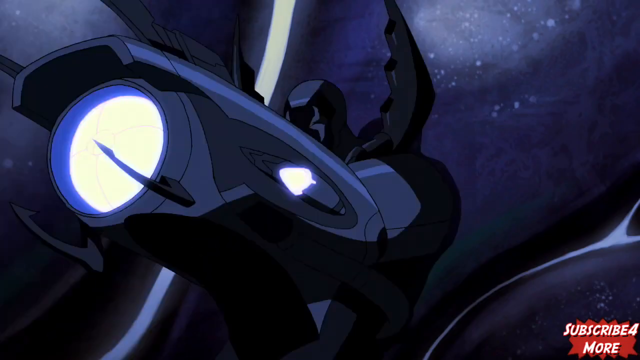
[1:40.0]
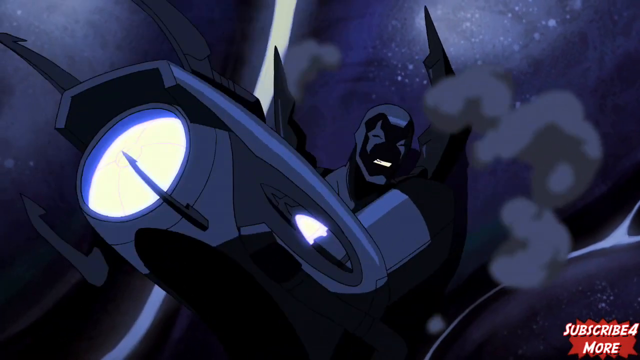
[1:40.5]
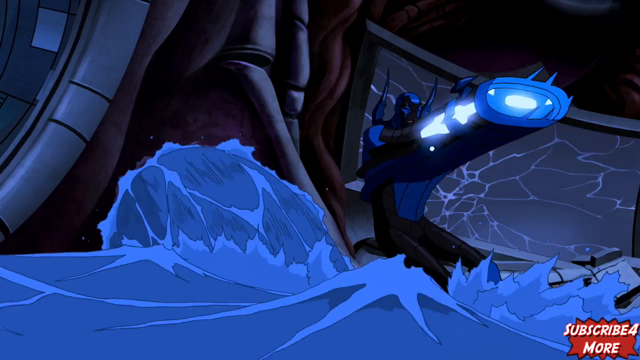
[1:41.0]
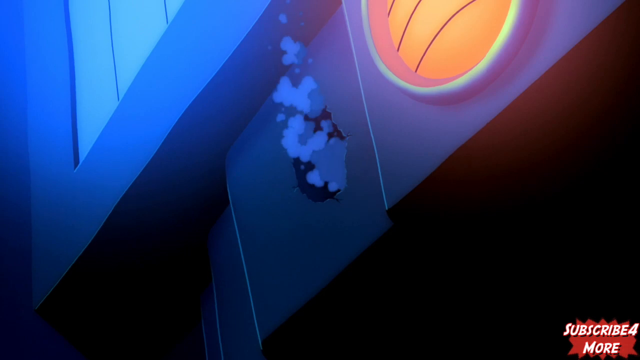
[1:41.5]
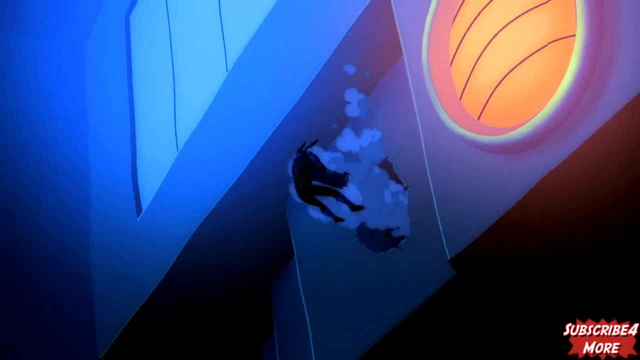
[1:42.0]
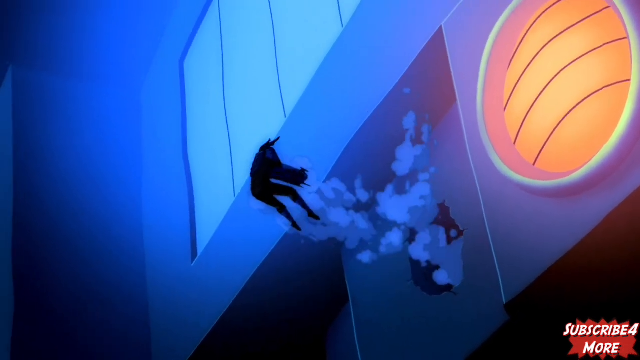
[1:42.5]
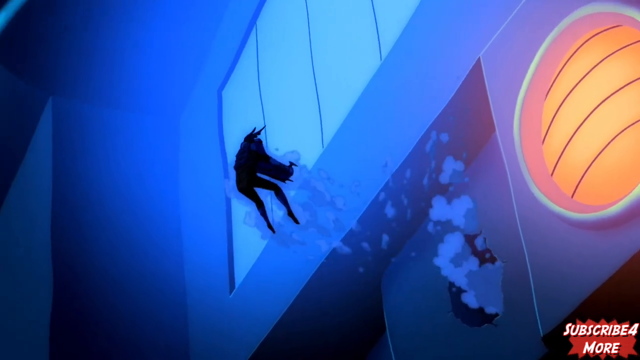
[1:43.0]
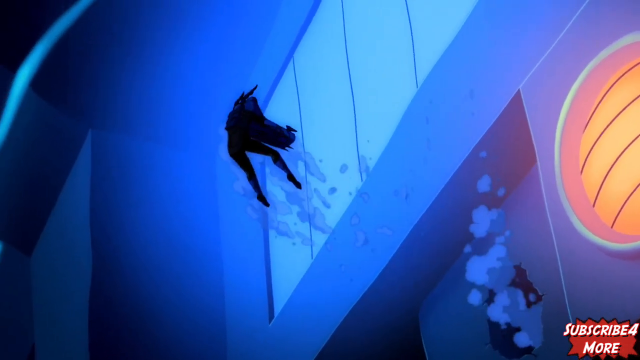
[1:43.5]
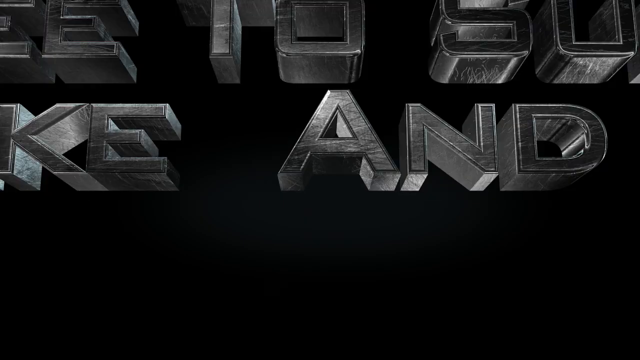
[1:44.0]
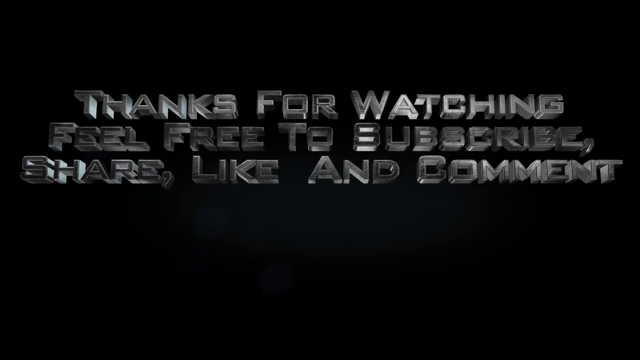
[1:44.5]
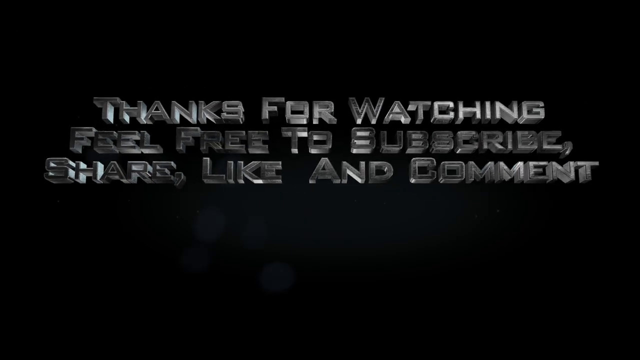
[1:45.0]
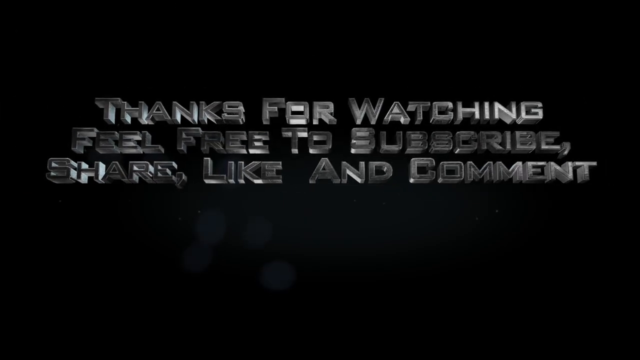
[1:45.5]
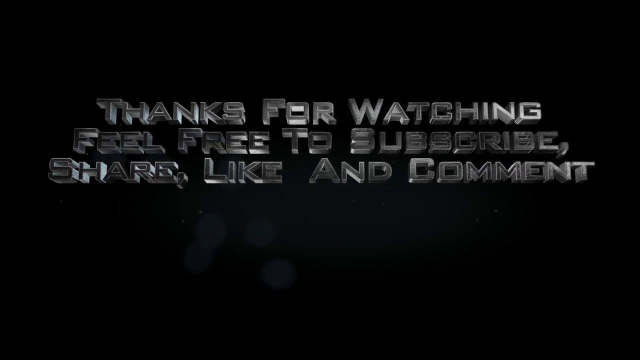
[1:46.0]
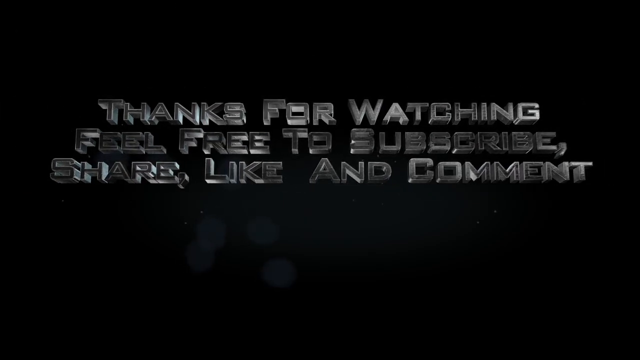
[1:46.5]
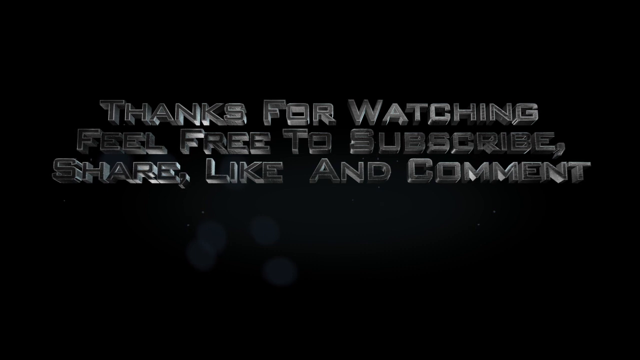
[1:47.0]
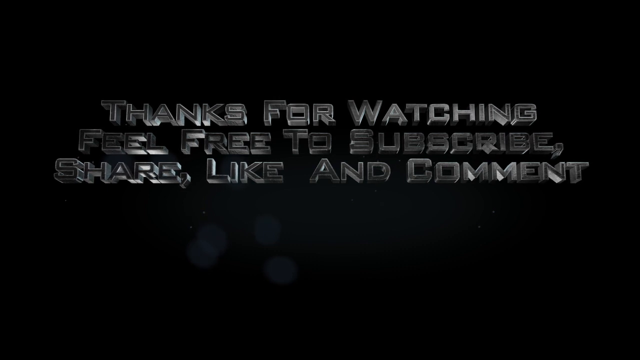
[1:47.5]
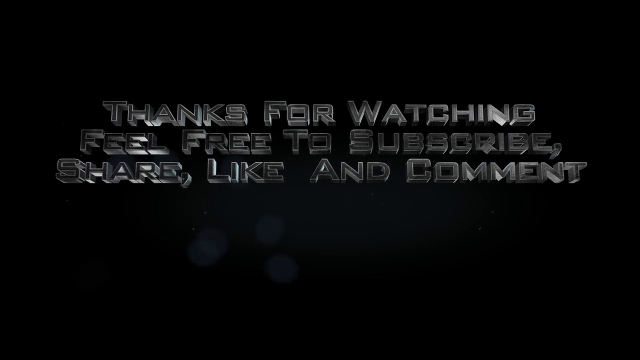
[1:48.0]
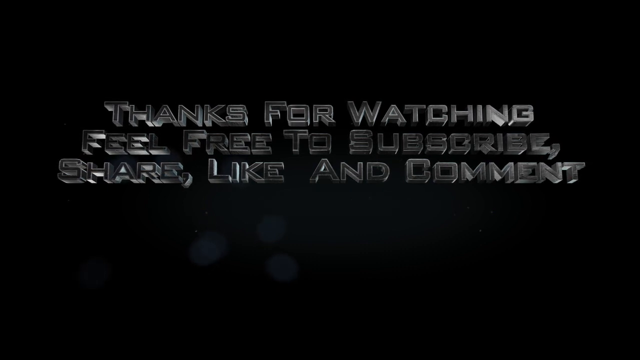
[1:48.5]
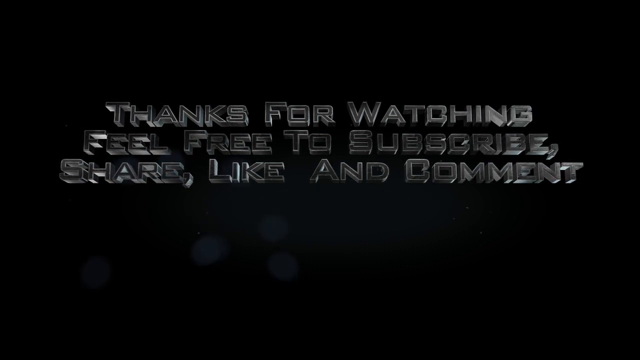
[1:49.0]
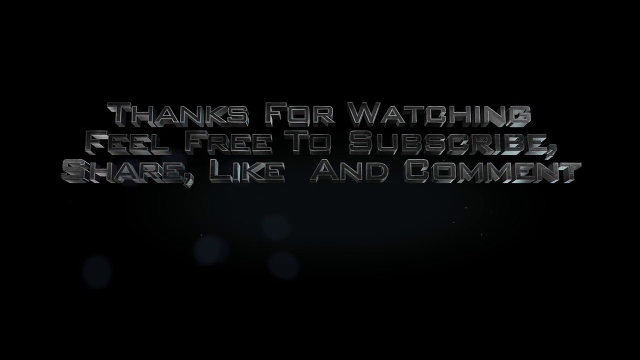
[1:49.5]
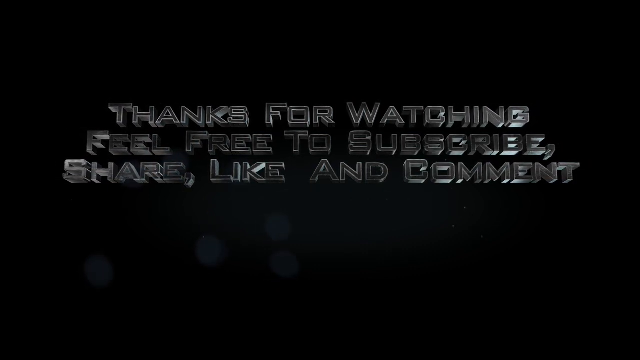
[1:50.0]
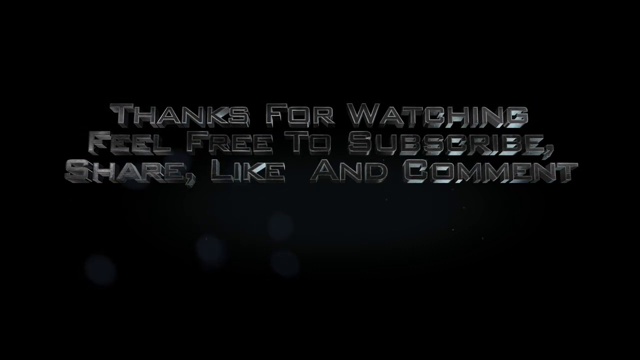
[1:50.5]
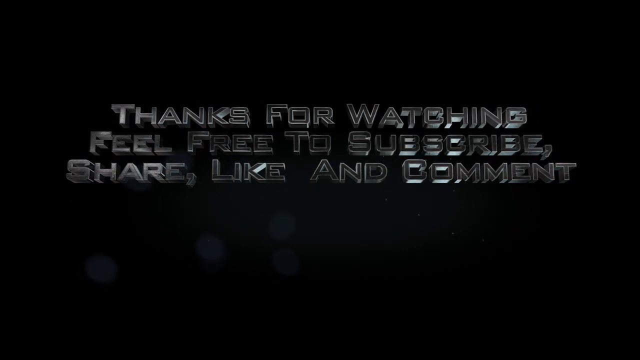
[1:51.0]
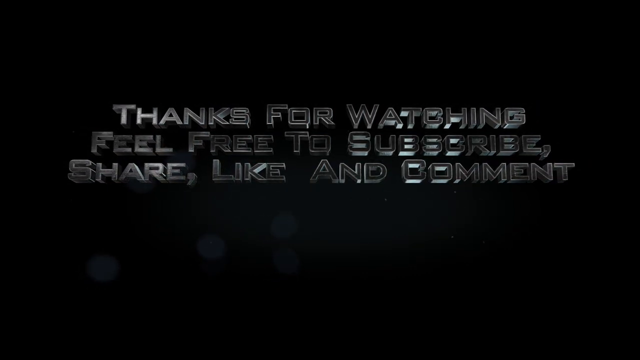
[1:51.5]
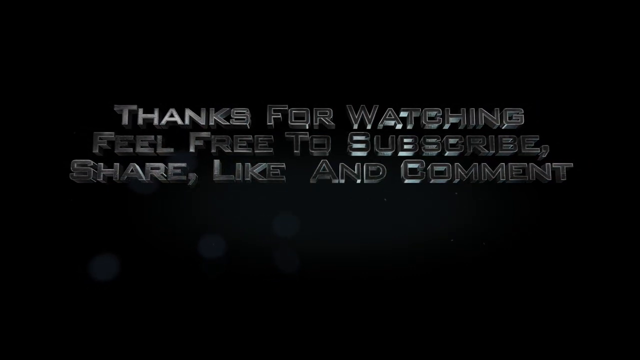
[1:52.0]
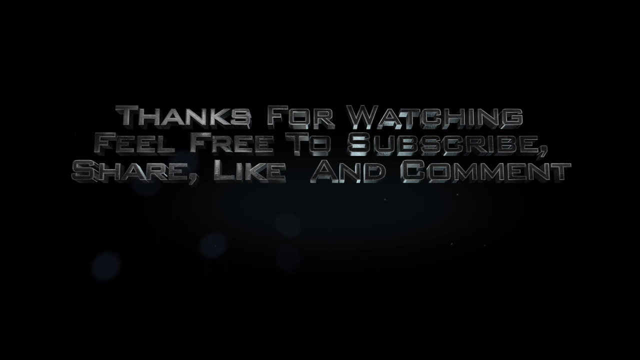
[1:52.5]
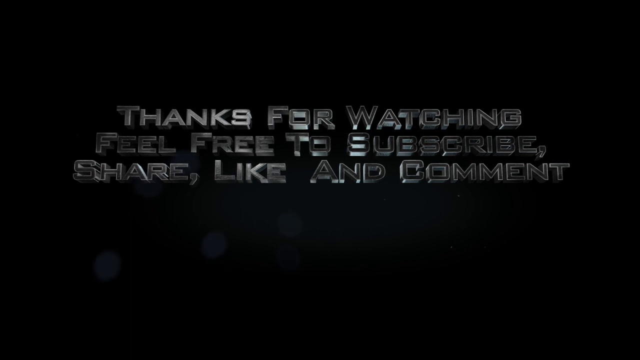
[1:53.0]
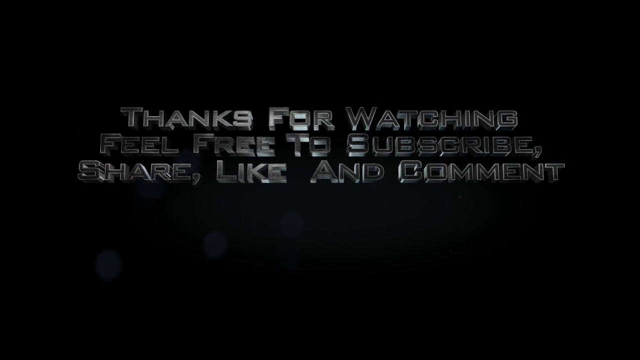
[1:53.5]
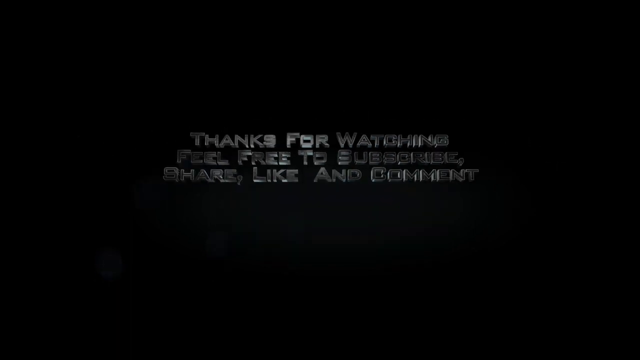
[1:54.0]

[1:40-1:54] The blue creature flies toward the waterfall and comes out, with bubbles coming from the entrance, and they shoot out into the water. Then, on a black screen, words flash to the center in silver and white, looking shiny: "thanks for watching. Feel free to subscribe, share, like, and comment." A light rotates across the text to make it look like metal. The text slowly fades, then gets swept away into the pitch blackness and vanishes.